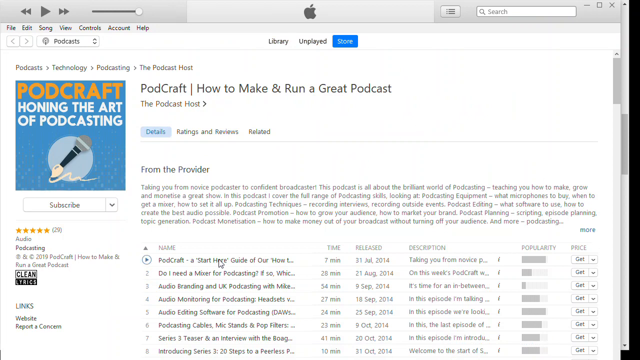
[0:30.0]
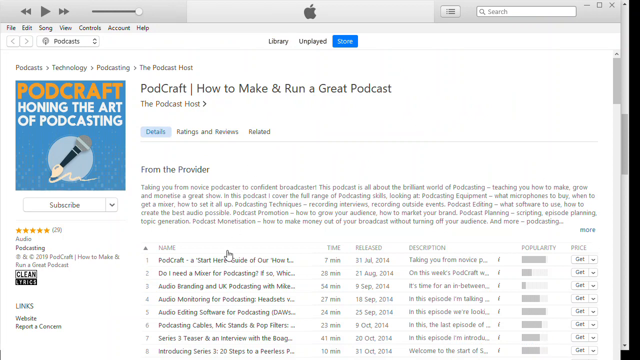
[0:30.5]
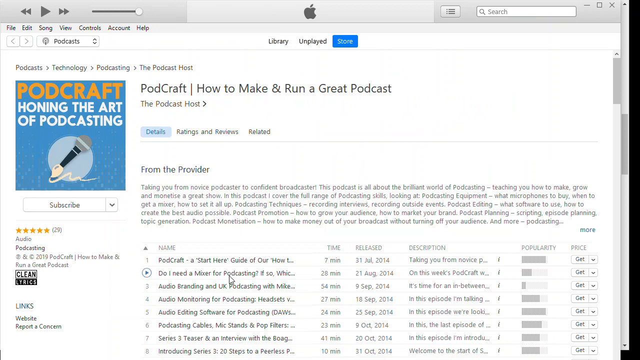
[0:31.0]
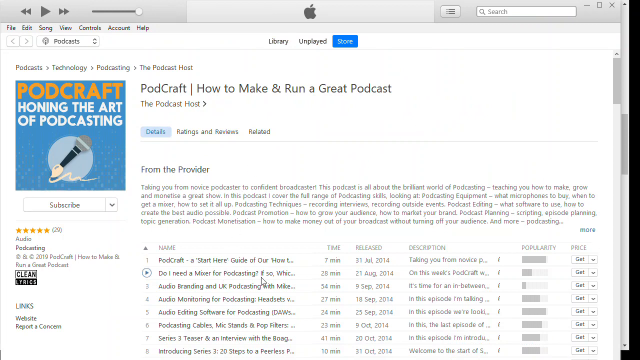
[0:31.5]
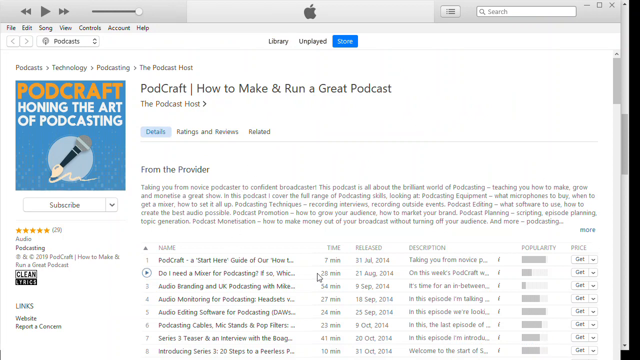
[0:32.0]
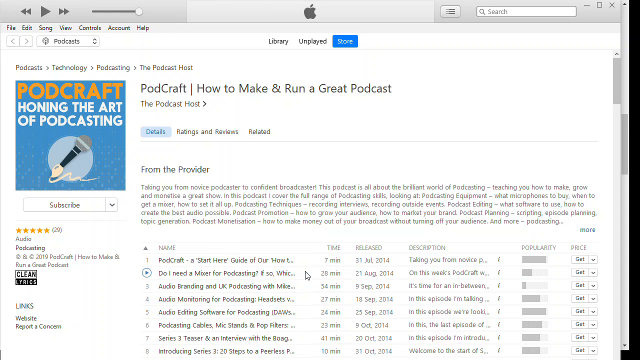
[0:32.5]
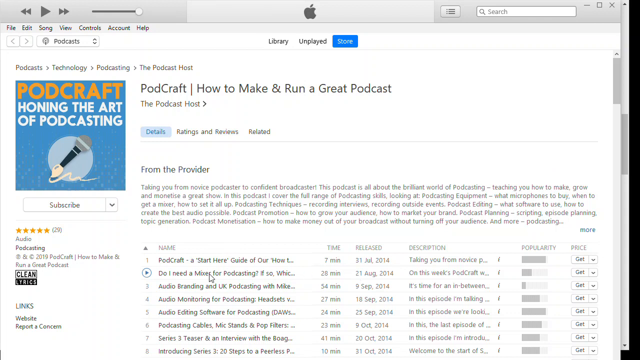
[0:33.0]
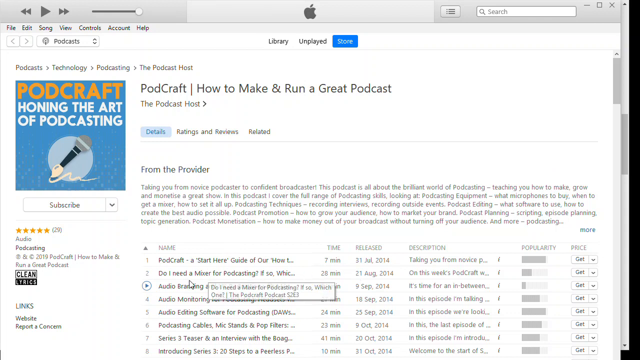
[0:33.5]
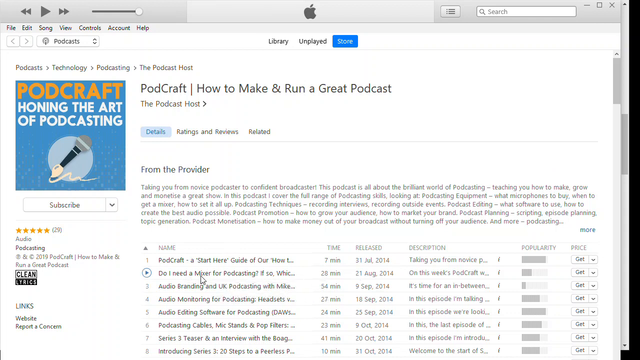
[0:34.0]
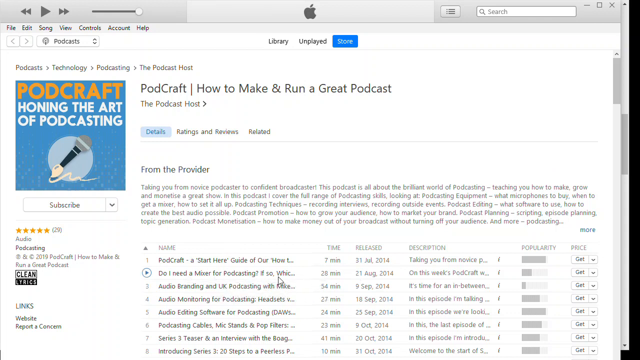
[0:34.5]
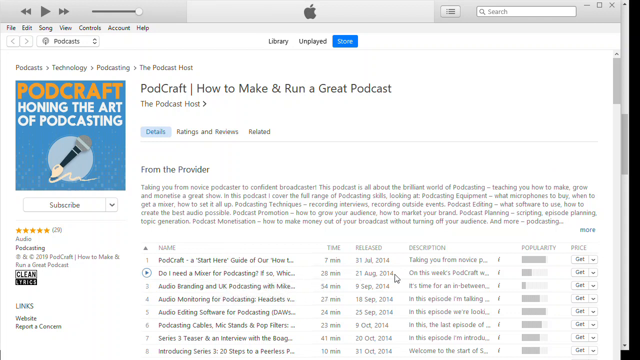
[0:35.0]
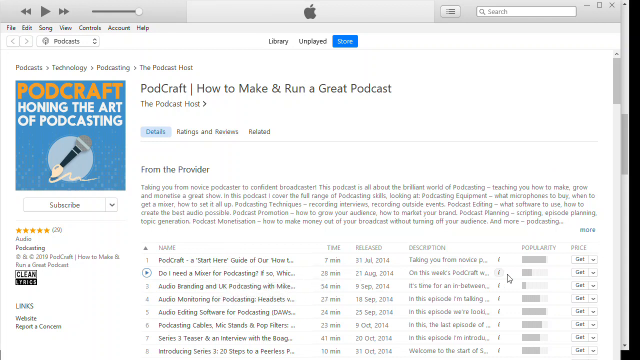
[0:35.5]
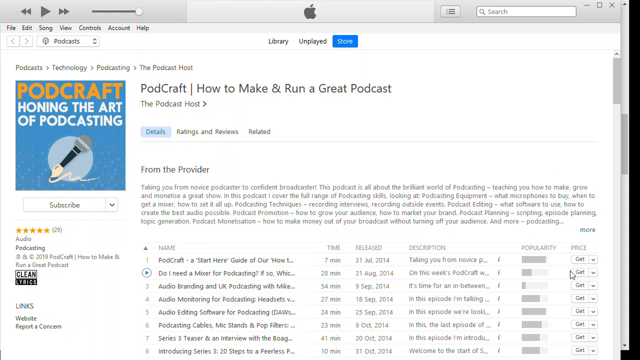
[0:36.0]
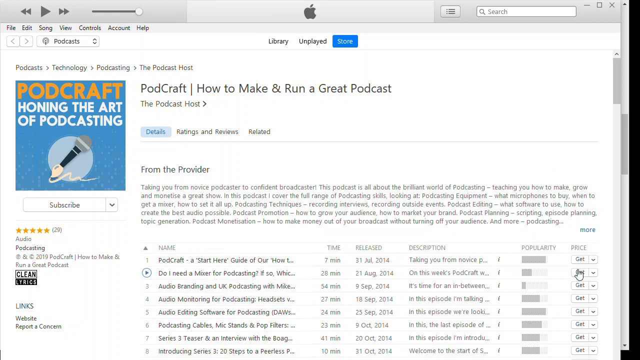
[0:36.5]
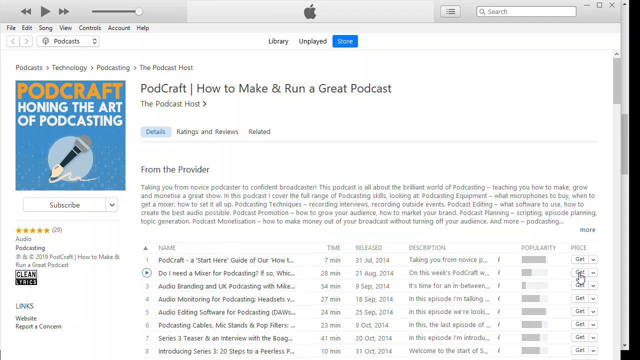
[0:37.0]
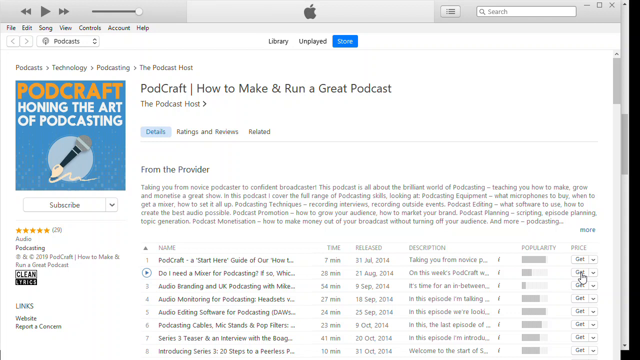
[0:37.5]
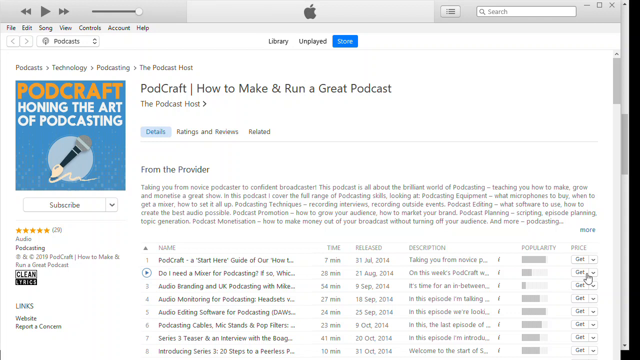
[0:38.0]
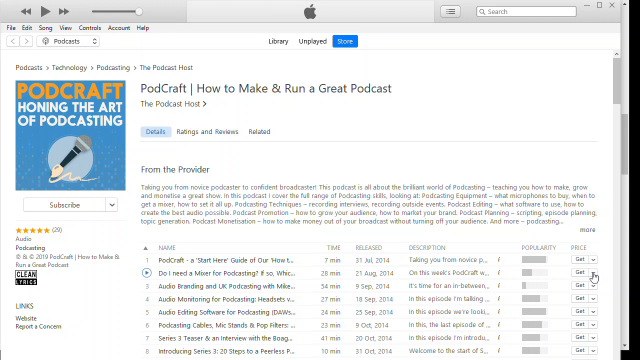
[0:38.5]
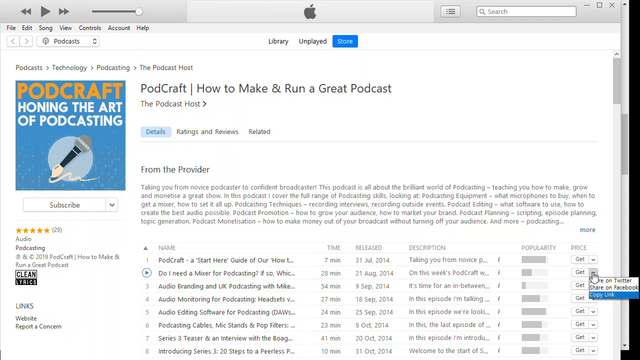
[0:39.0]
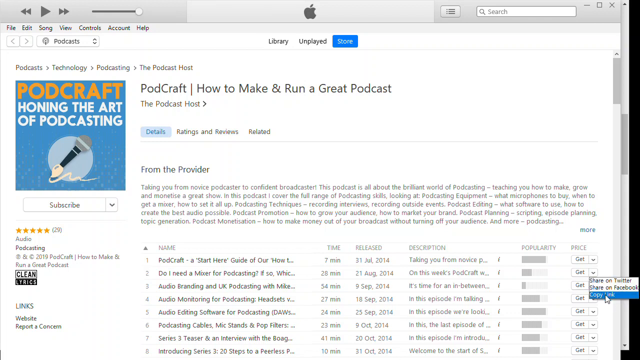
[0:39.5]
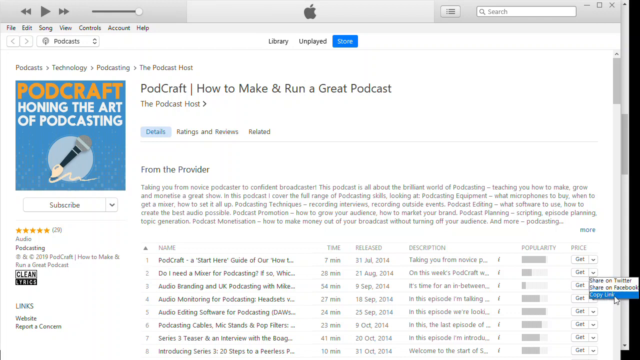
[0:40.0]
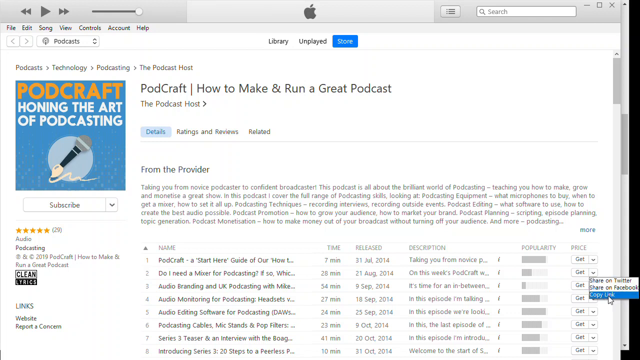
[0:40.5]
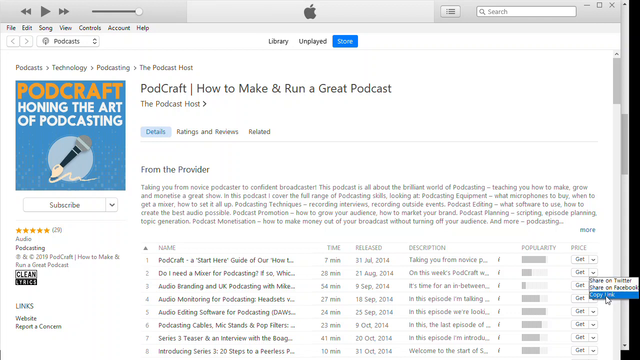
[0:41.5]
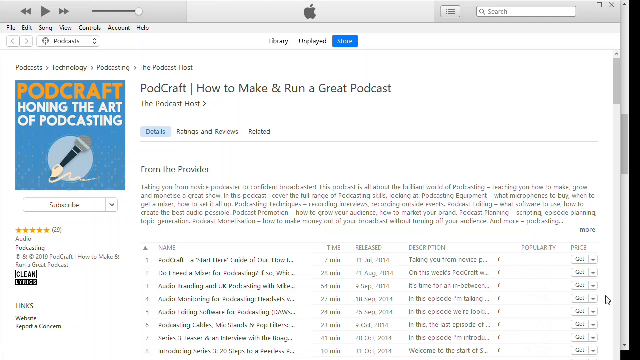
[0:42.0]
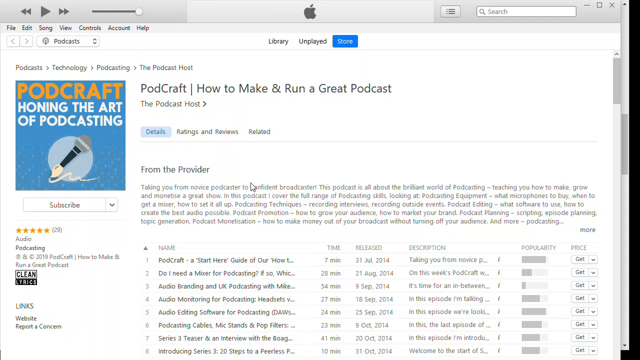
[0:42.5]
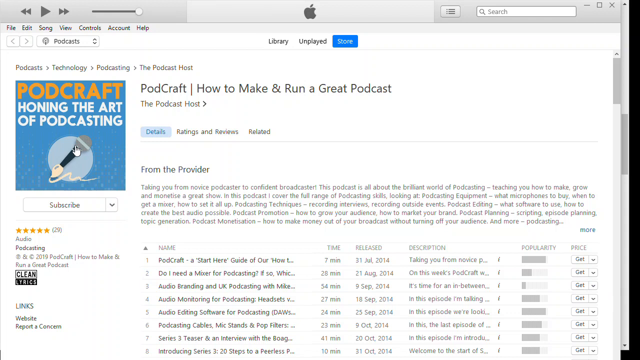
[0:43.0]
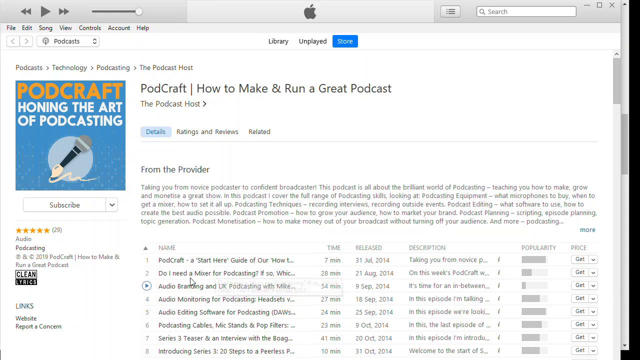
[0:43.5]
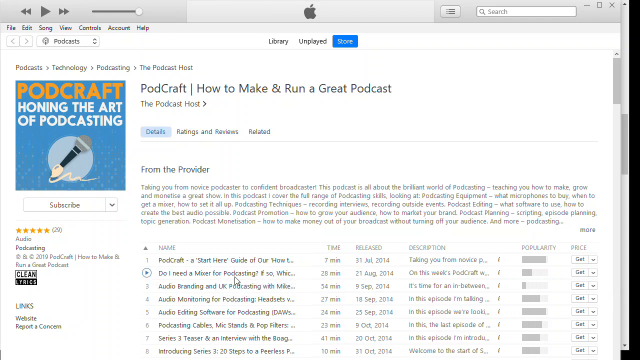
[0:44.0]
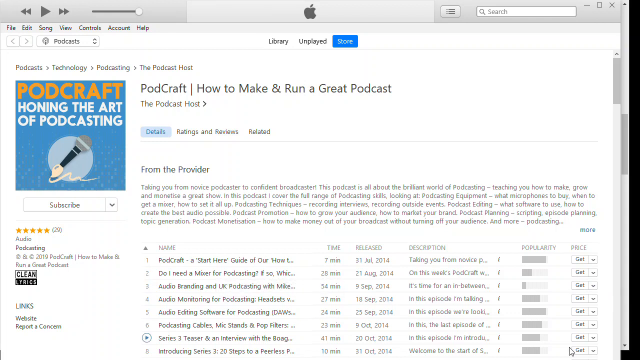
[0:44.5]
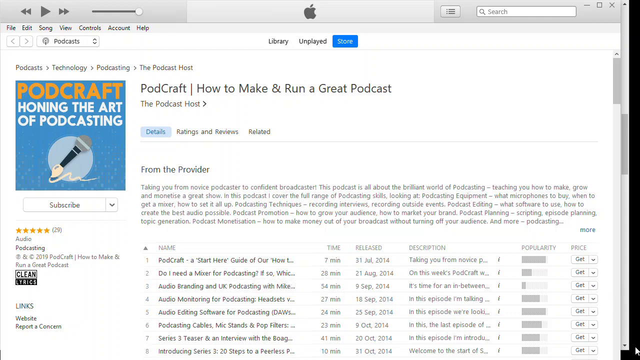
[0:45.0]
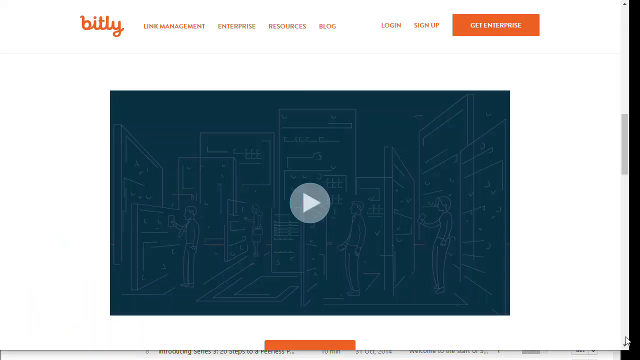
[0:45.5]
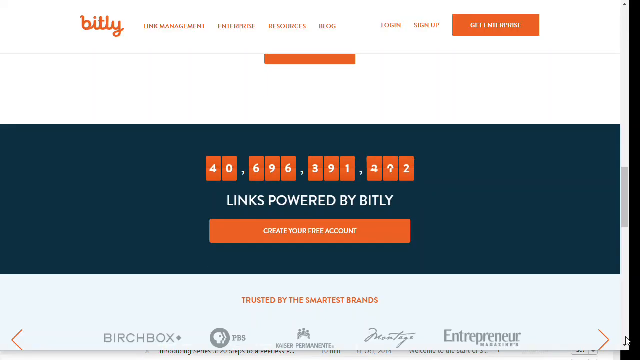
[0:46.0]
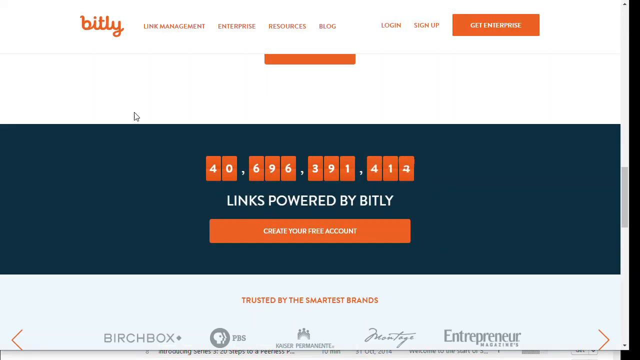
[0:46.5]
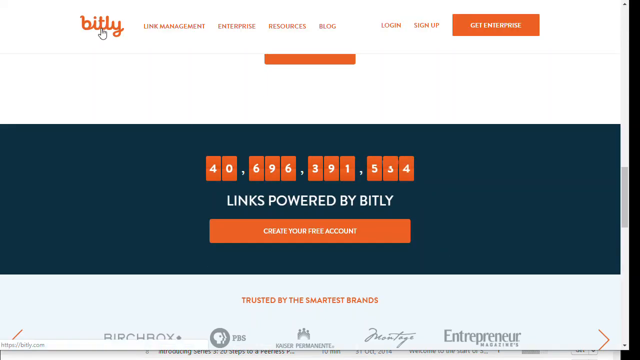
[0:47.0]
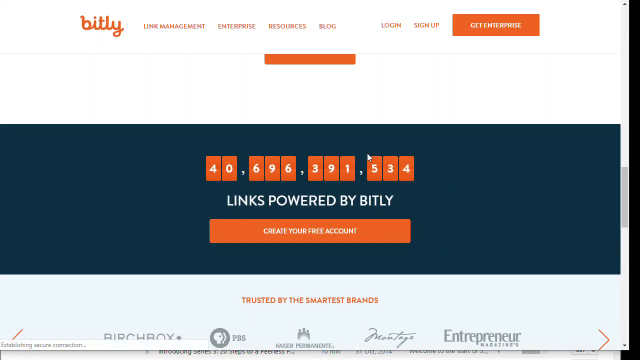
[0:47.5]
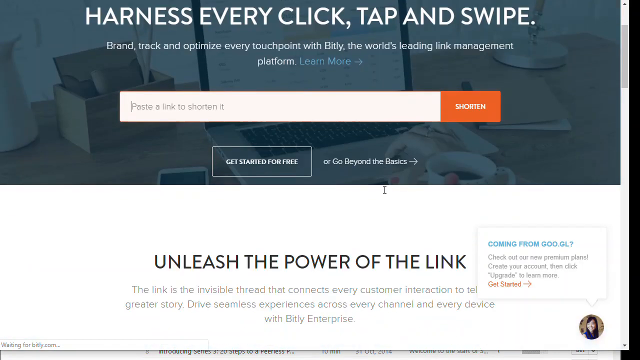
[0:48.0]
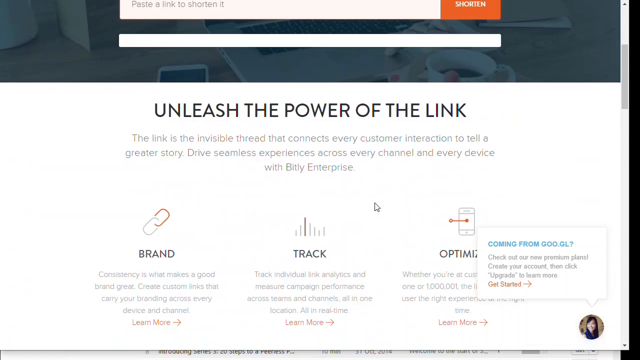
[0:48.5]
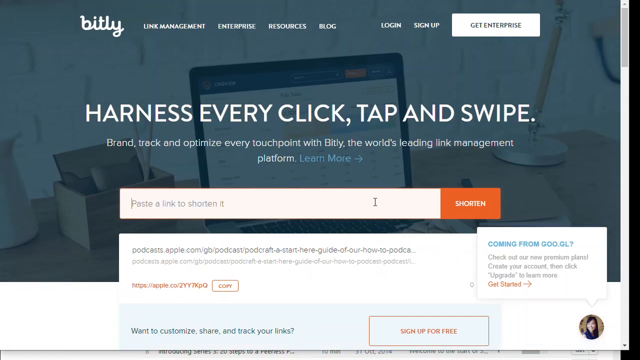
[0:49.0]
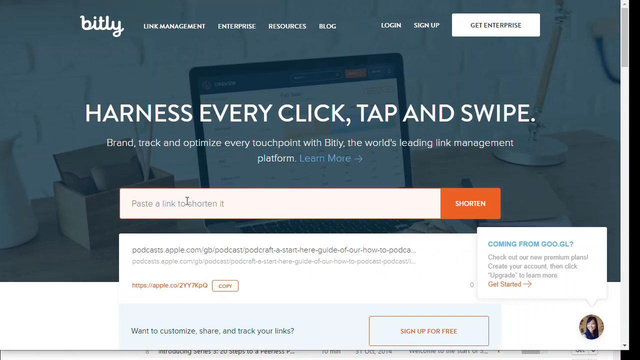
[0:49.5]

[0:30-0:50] An Apple program is on screen, with the Apple logo in the middle, and it is probably a podcast player. It shows a podcast called "PodCraft, how to make and run a great podcast." On the left it says "PodCraft, honing the art of podcasting." The details tab is selected, showing a description that says "from the provider" and tells about the podcast. Below is a list of recordings numbered from one through six and beyond, giving each episode's name, release time, description, popularity and price. The podcast appears to be filed under the category podcasts, technology, podcasting, the podcast host. The page then shows the bit.ly website, a URL shortener, on its landing page, which says "40 billion links powered by bit.ly" with a button to create an account.